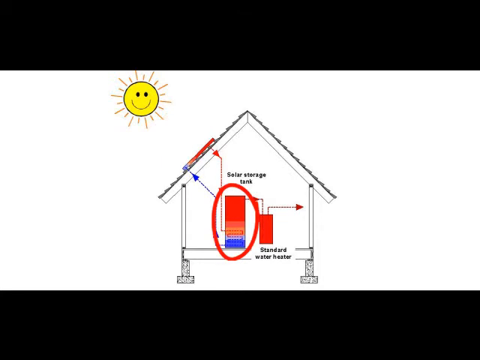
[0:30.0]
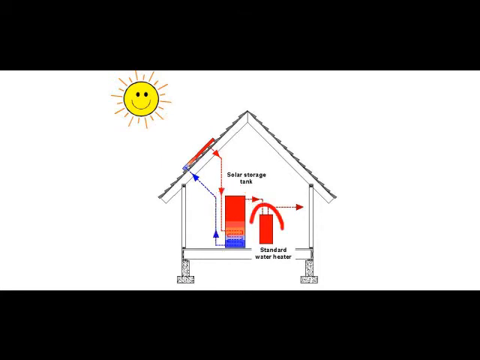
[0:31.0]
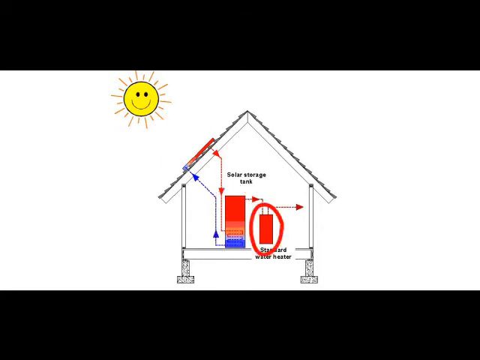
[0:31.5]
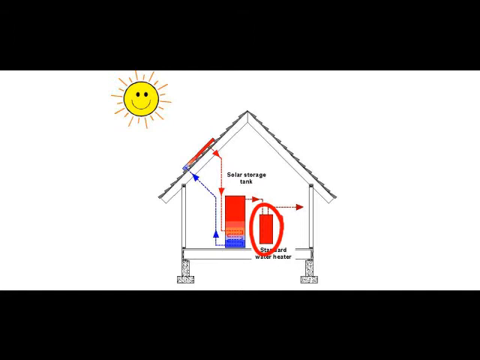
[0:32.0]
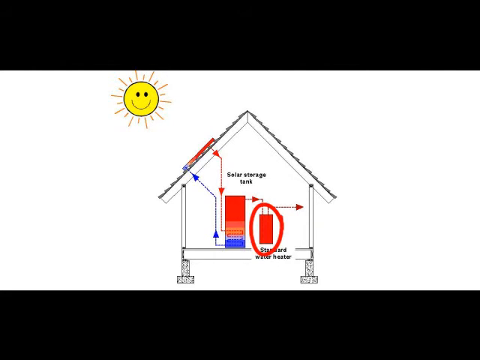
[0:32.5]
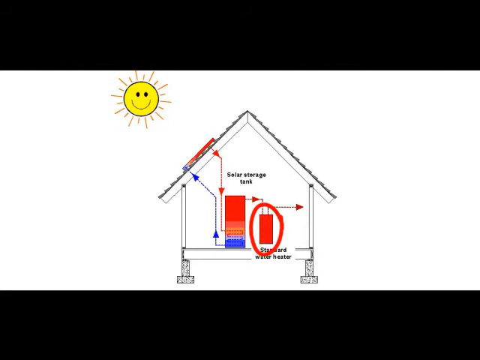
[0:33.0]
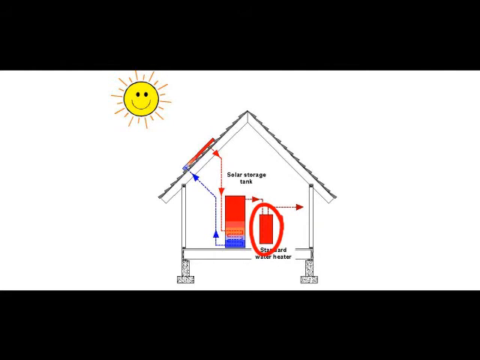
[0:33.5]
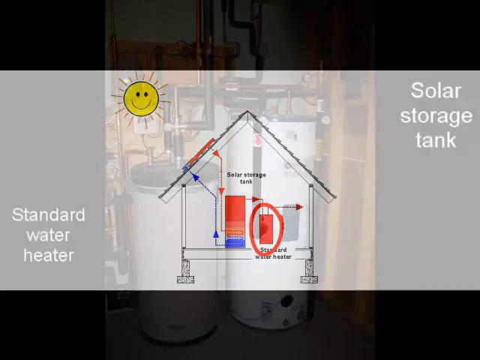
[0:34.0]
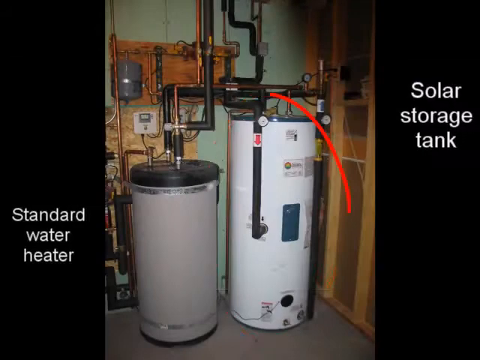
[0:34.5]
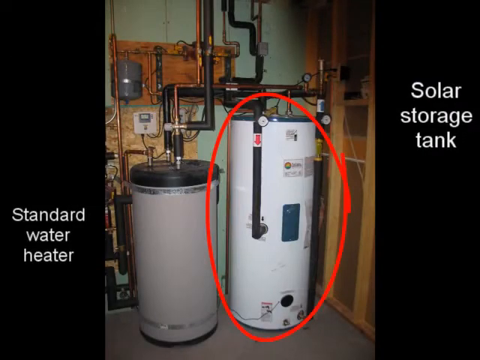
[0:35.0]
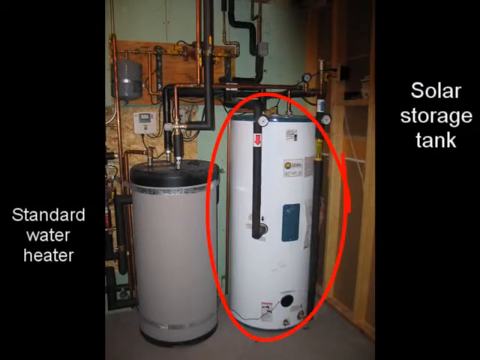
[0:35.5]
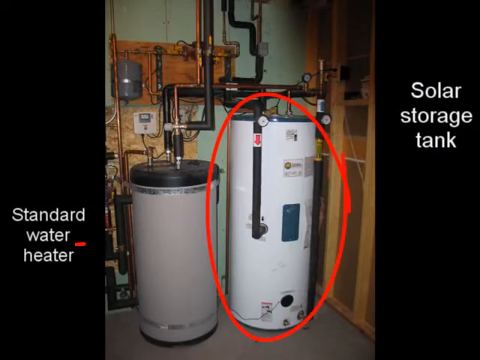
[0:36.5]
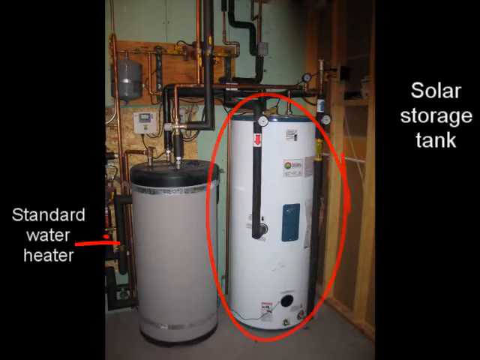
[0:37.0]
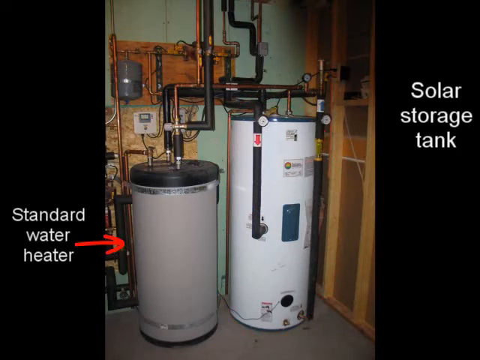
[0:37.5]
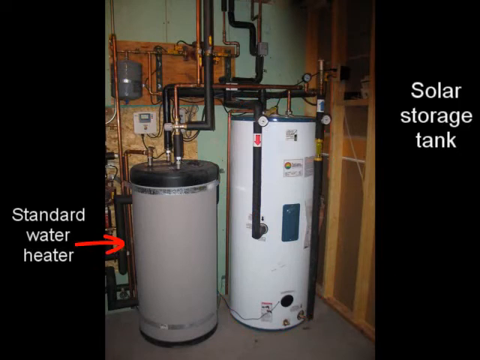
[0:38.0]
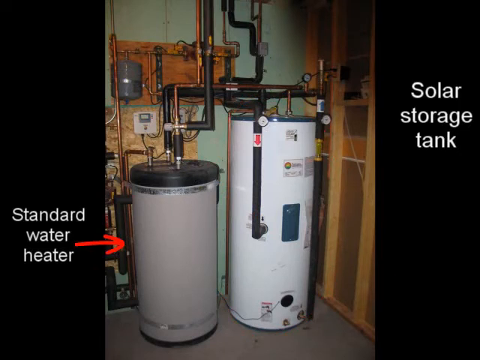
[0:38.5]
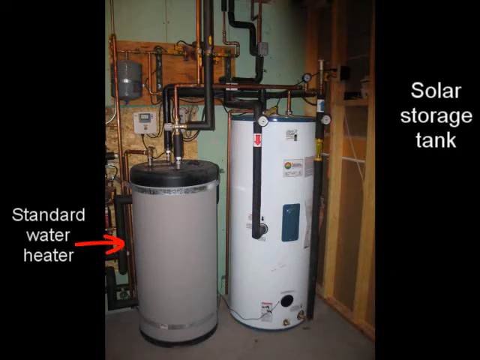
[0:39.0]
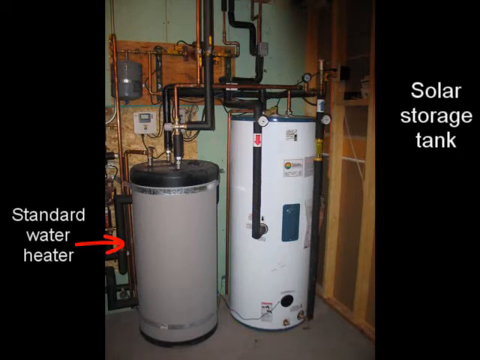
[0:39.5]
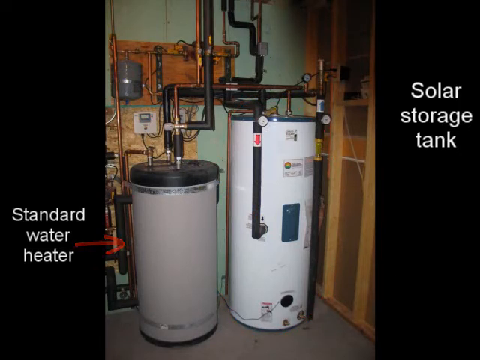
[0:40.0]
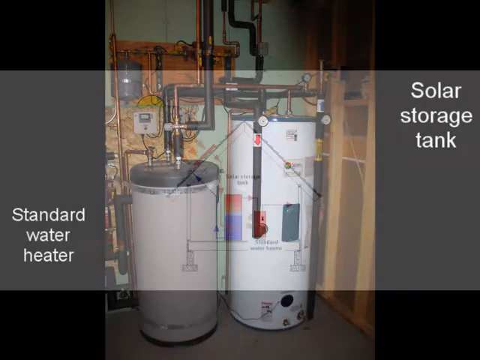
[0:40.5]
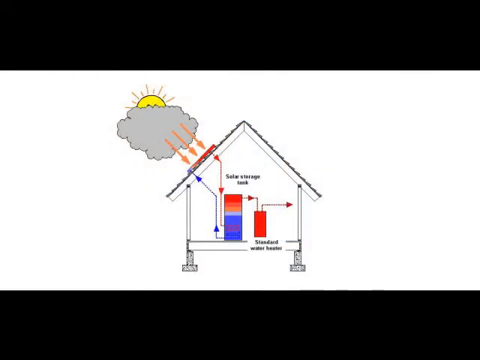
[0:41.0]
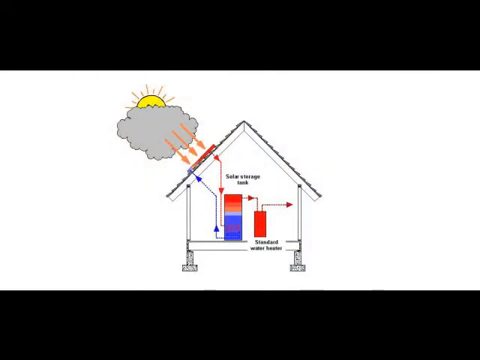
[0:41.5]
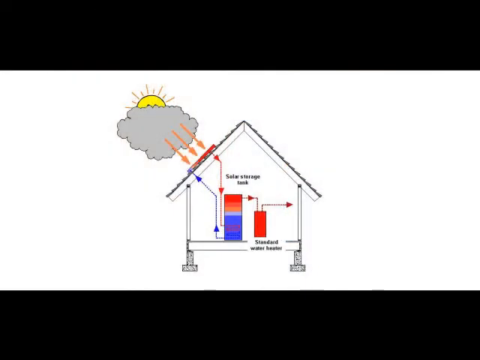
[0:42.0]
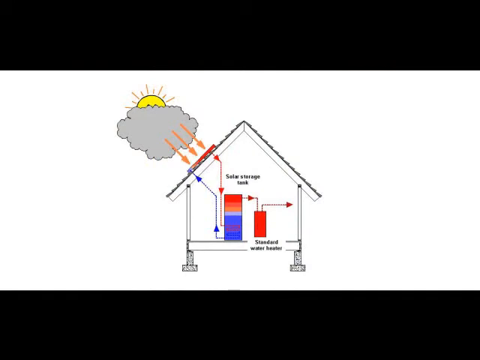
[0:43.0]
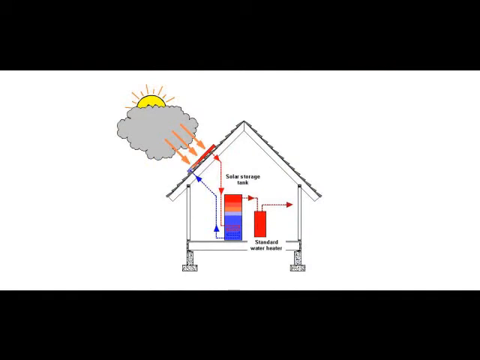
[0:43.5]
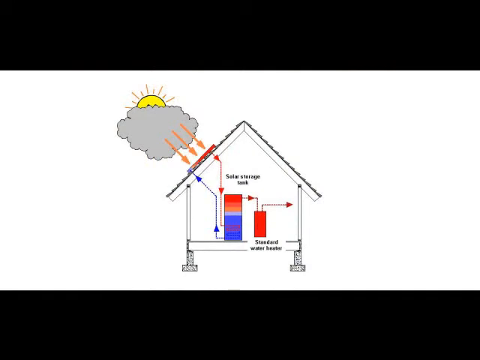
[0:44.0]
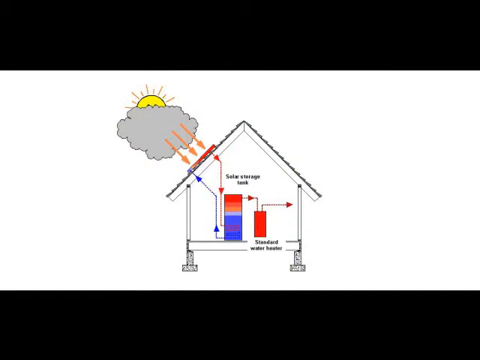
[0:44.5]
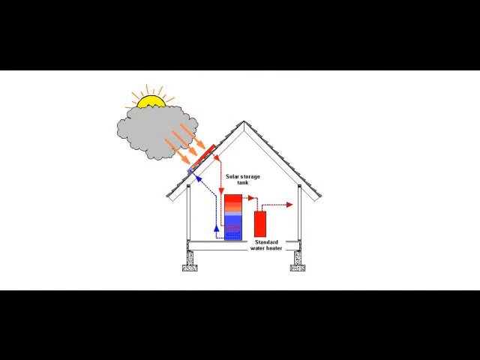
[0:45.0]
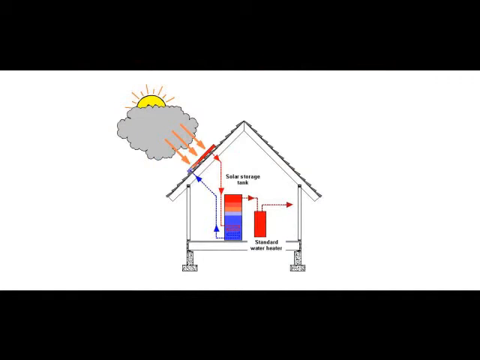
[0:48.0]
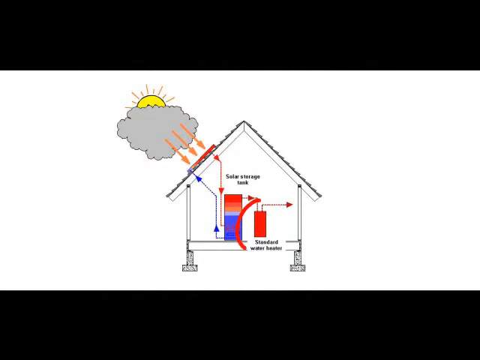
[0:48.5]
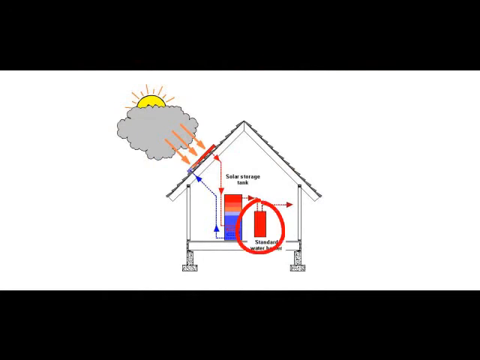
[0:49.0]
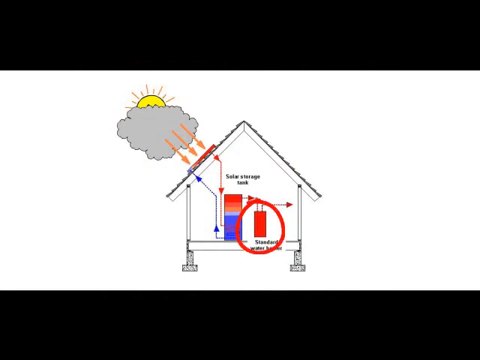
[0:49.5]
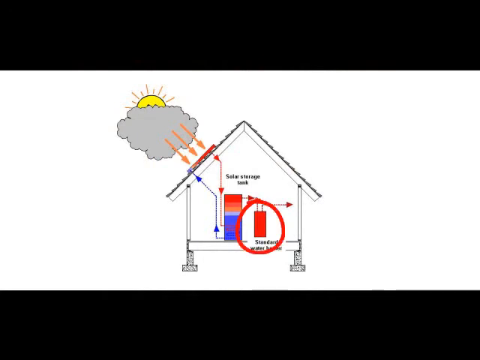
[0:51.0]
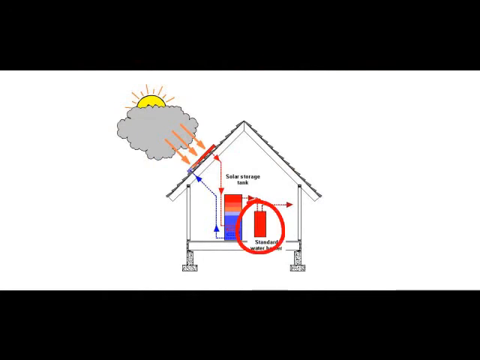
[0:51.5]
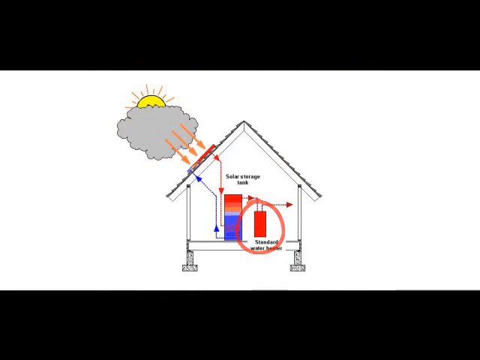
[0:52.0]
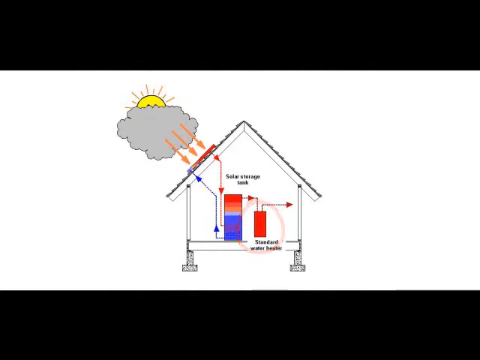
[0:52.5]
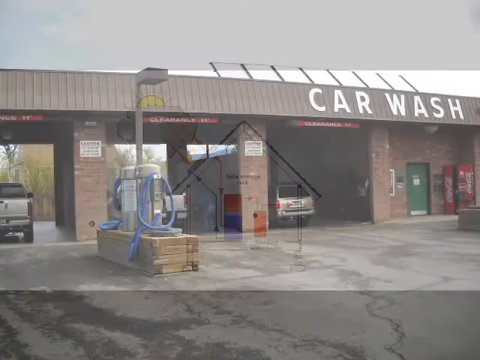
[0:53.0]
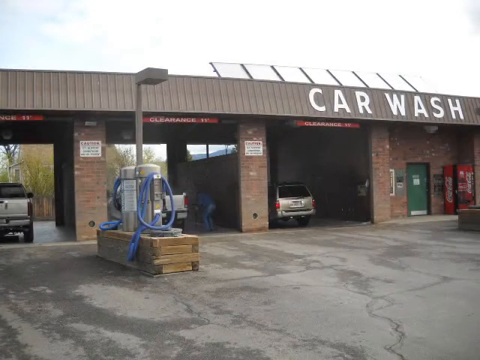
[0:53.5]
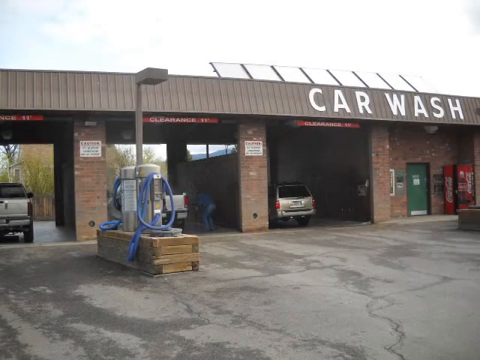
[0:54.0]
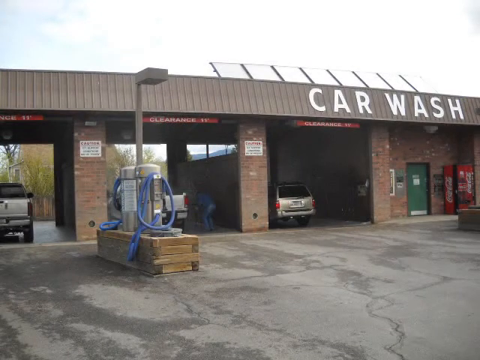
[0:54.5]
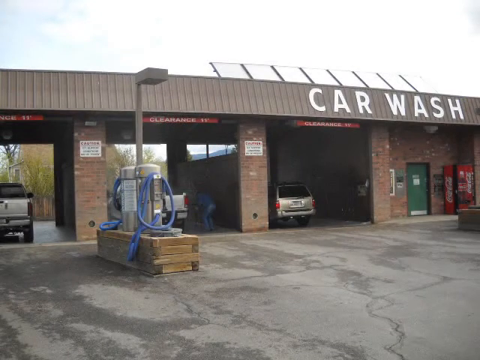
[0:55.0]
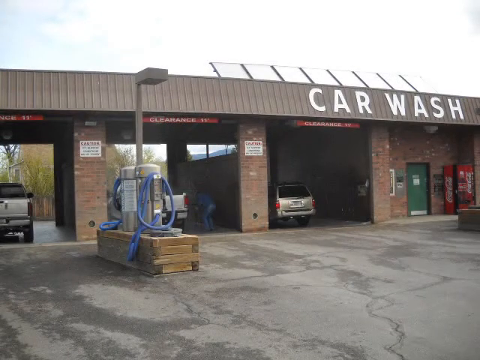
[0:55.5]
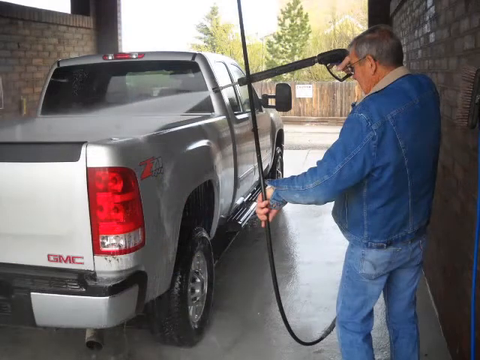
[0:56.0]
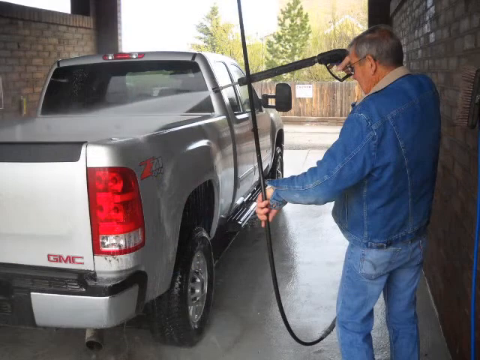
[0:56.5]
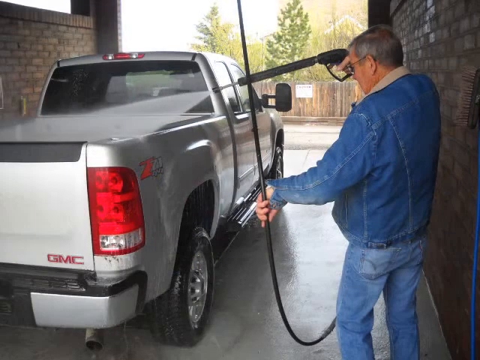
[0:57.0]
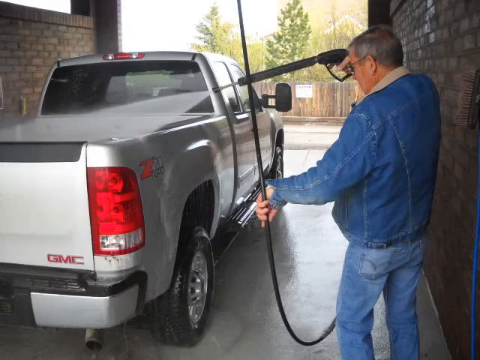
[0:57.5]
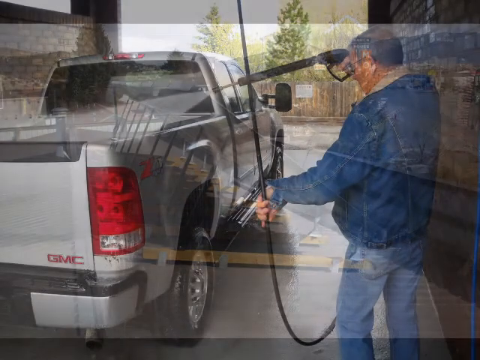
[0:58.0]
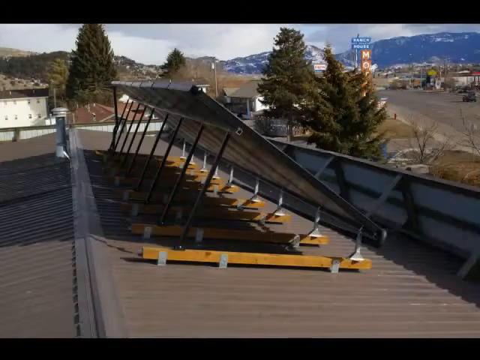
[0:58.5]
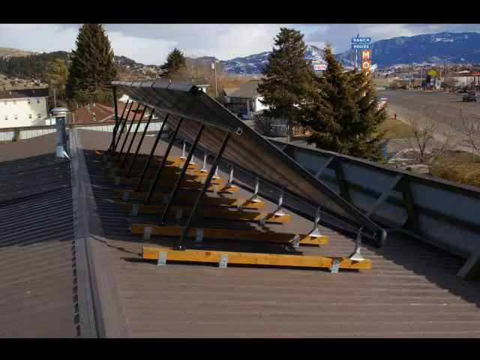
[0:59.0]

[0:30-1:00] The water heater is circled in red. The next picture shows what looks like the inside of a boiler, with lots of pipes and two tanks. The larger one on the right is circled in red and labeled "solar storage tank" beside it; the smaller one is labeled "standard water heater", and an arrow appears pointing at the smaller tank. The house diagram returns, now with a grey cloud obscuring most of the sun. Three orange arrows point at the solar panel on the roof, and the solar storage tank looks different: the blue section is much taller, then turns to orange, with just a tiny bit of red at the top, perhaps indicating that it heats less effectively in cloudy weather. The standard water heater is then circled. Next is a car wash, with "car washes" written on the wall of the building and what appears to be a row of panels above it. Three cars are in a row, and there is a Coca-Cola vending machine. A man wearing a denim jacket and jeans uses a large hose to clean his truck. Then the row of solar panels is shown; they look almost freestanding, apparently bolted down but looking as if they could be moved, and they appear to be on the roof of what is presumably the car wash. Mountains and a road are in the distance.